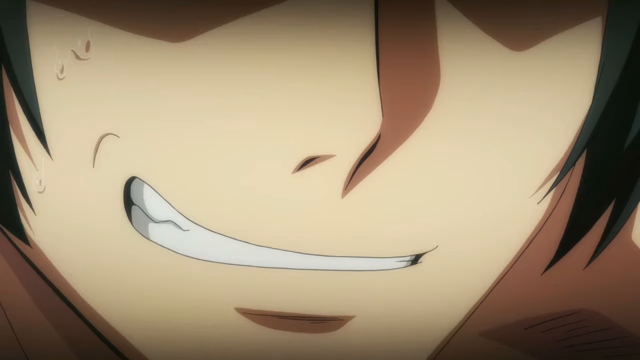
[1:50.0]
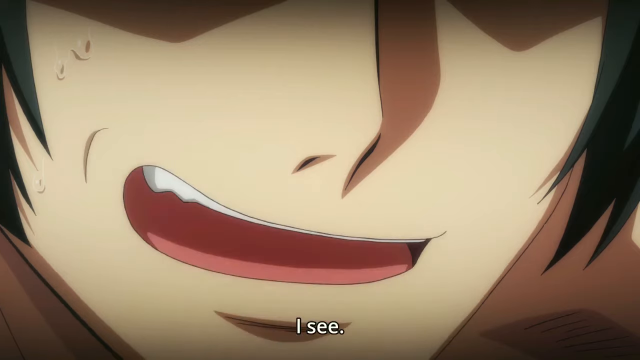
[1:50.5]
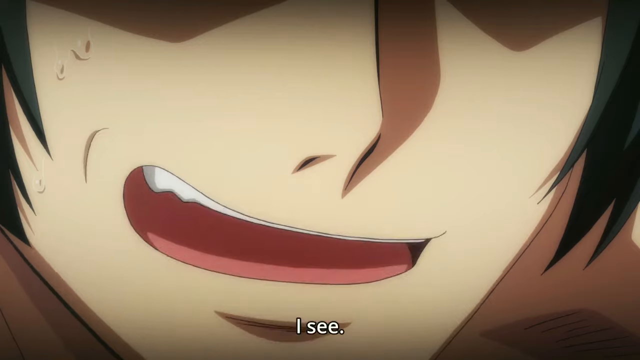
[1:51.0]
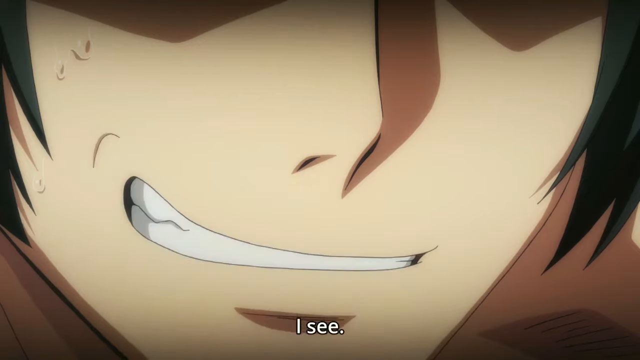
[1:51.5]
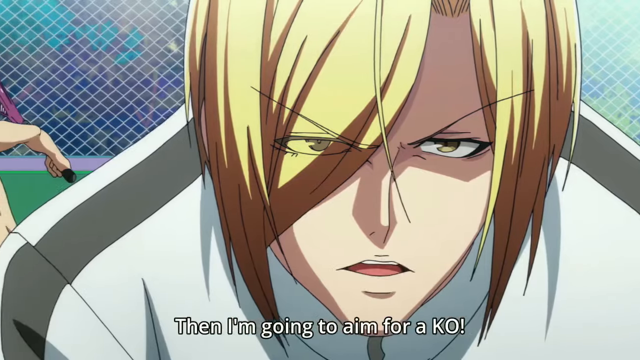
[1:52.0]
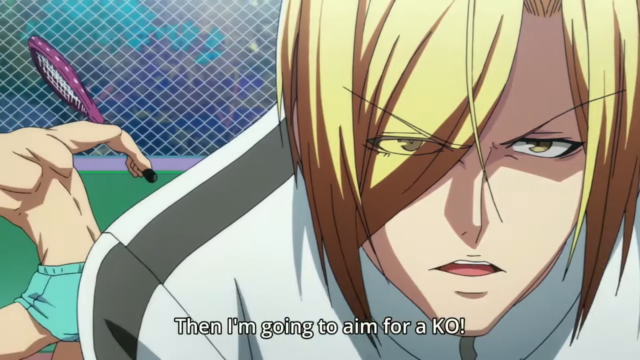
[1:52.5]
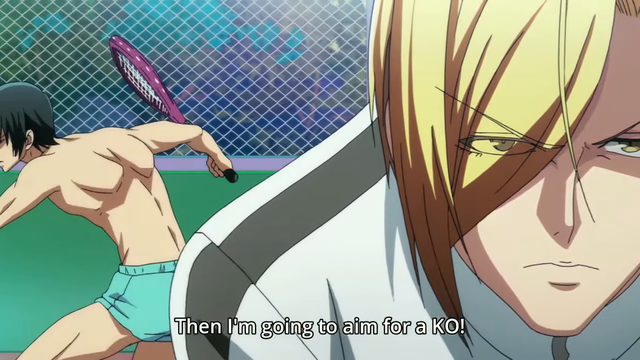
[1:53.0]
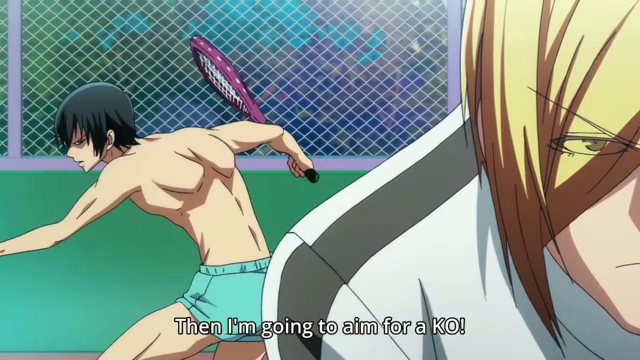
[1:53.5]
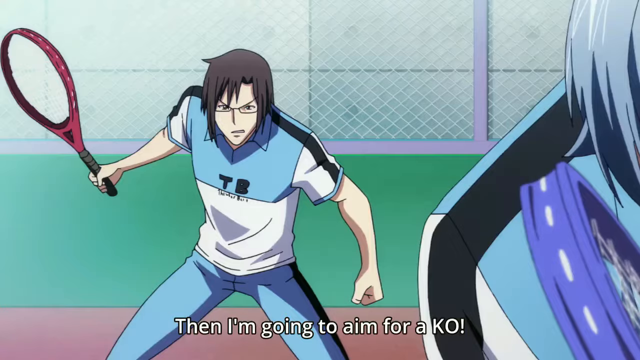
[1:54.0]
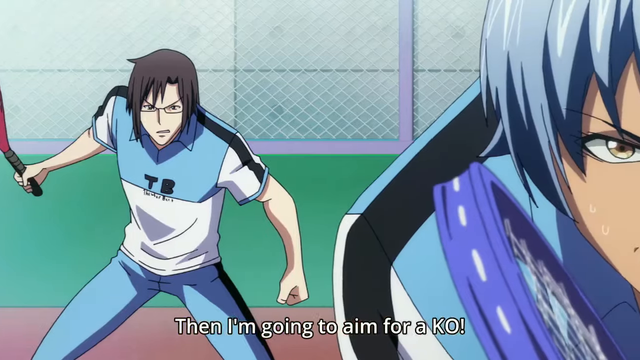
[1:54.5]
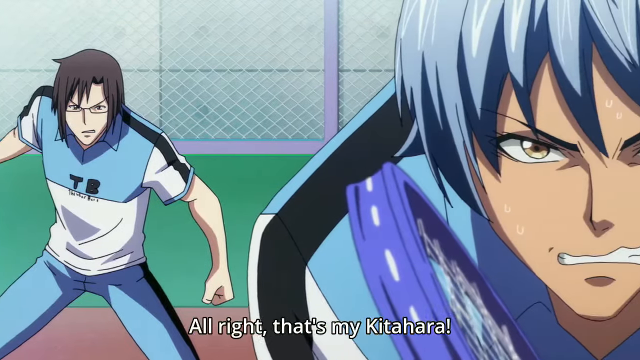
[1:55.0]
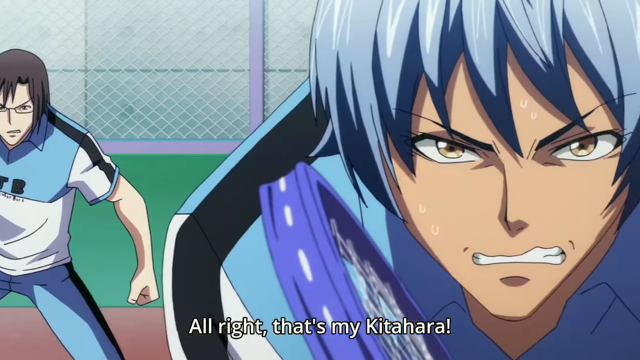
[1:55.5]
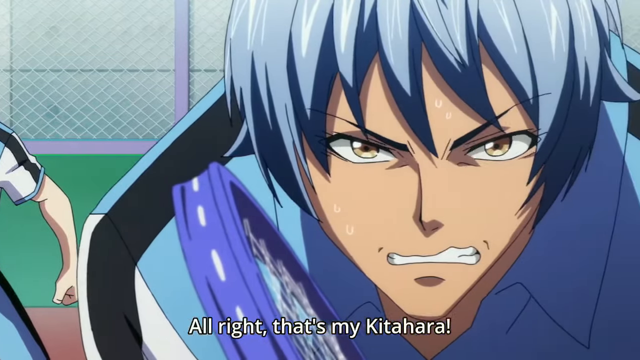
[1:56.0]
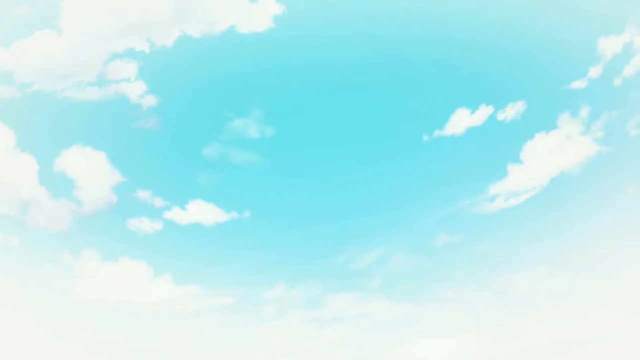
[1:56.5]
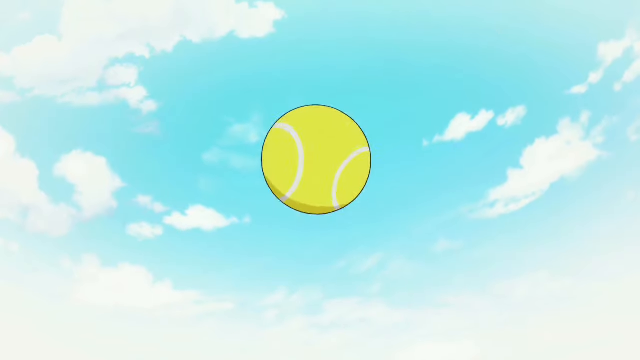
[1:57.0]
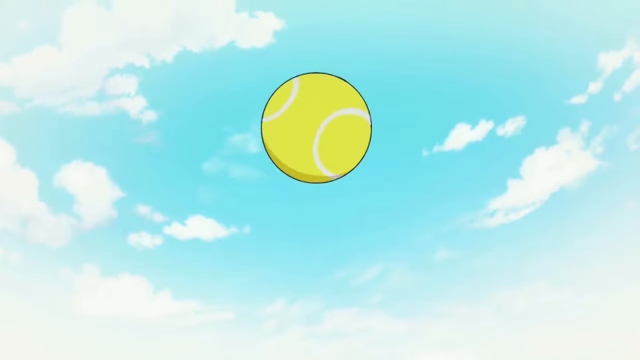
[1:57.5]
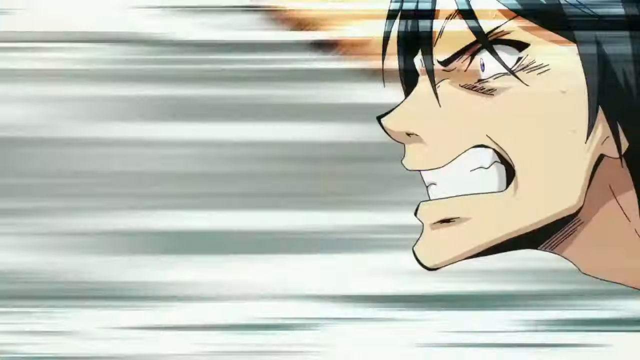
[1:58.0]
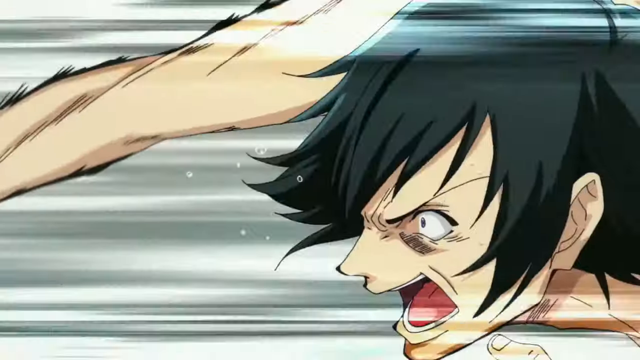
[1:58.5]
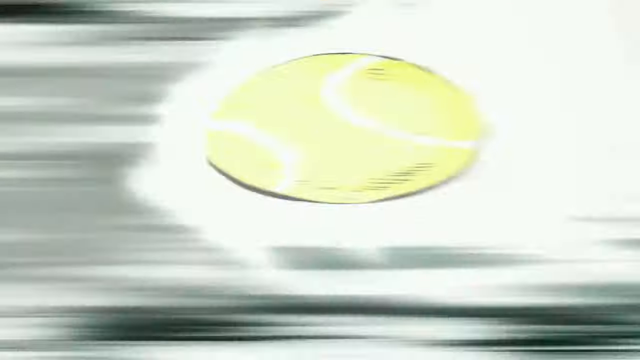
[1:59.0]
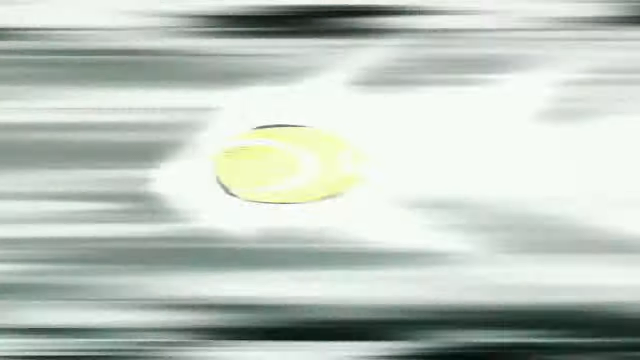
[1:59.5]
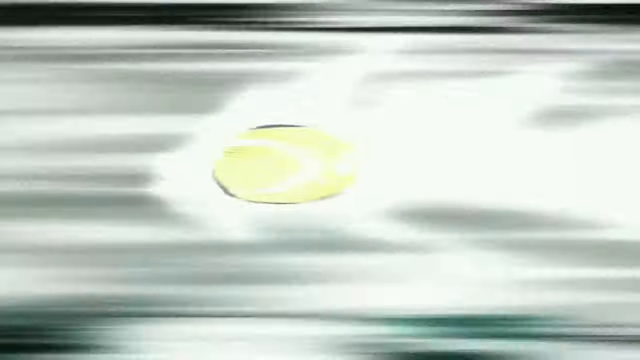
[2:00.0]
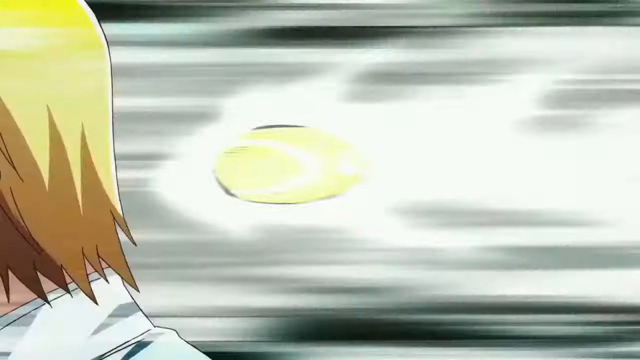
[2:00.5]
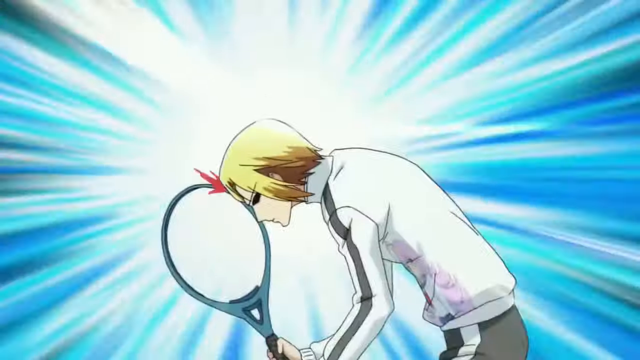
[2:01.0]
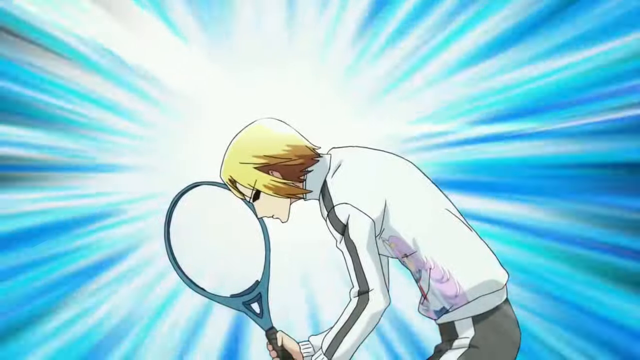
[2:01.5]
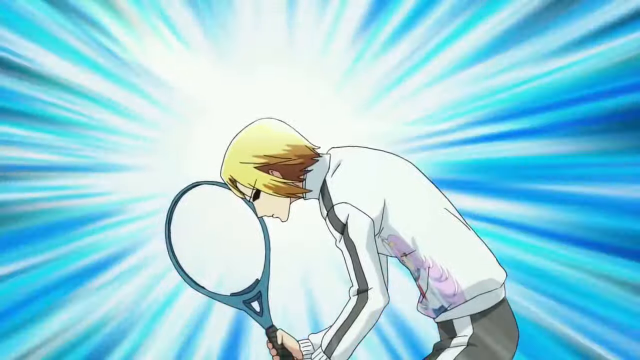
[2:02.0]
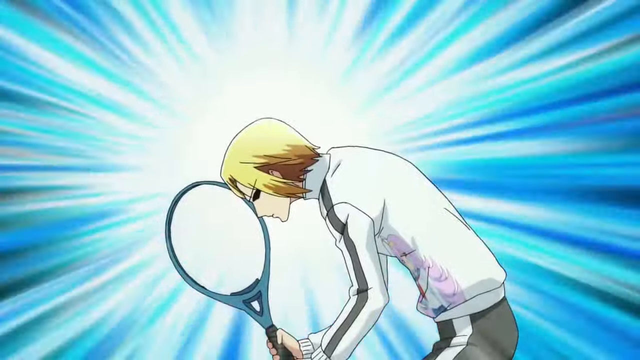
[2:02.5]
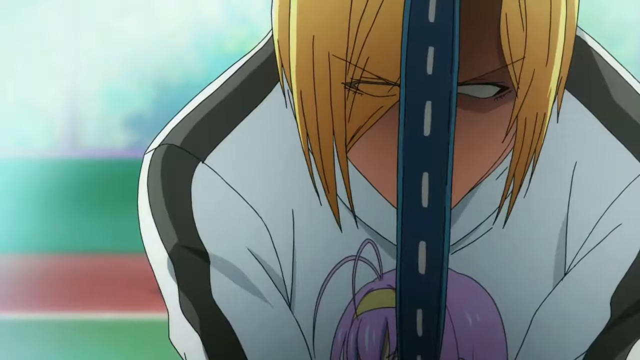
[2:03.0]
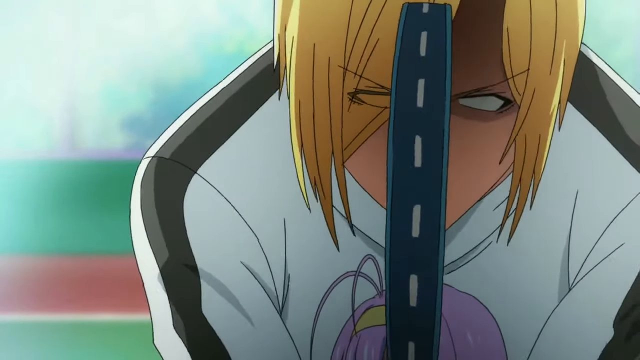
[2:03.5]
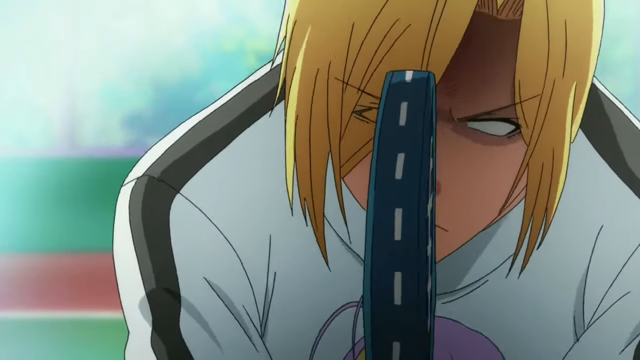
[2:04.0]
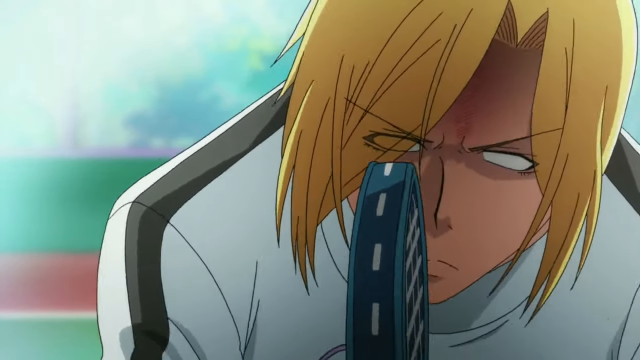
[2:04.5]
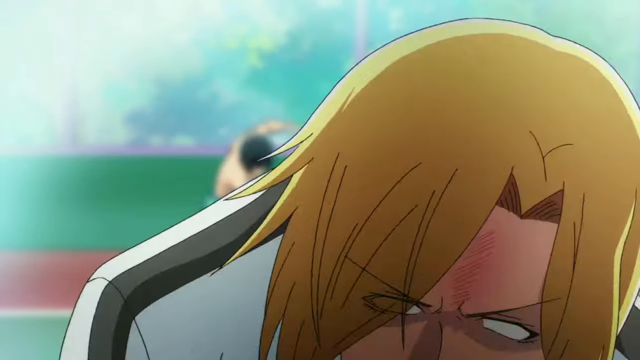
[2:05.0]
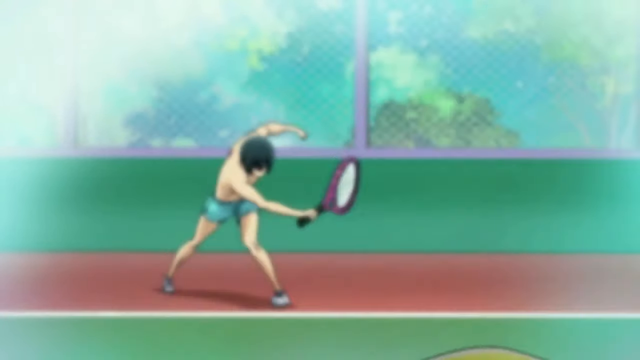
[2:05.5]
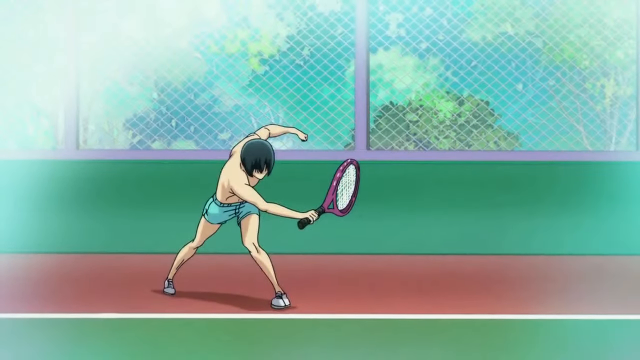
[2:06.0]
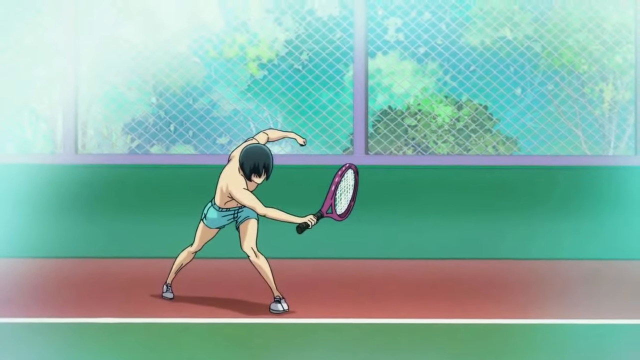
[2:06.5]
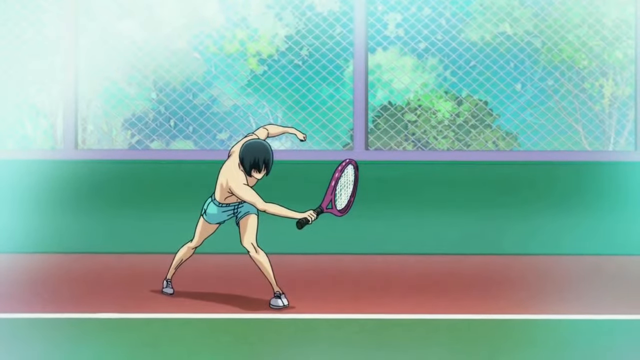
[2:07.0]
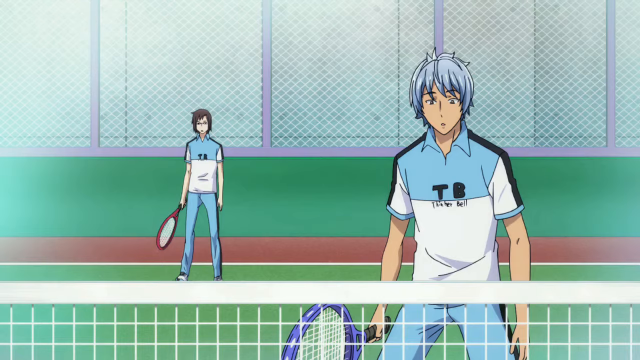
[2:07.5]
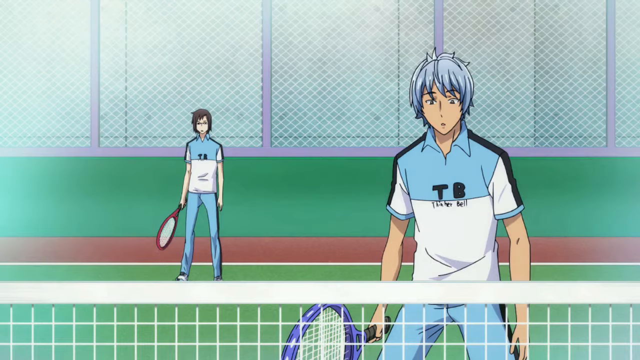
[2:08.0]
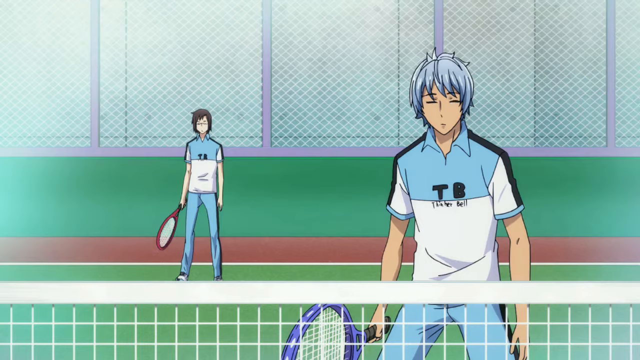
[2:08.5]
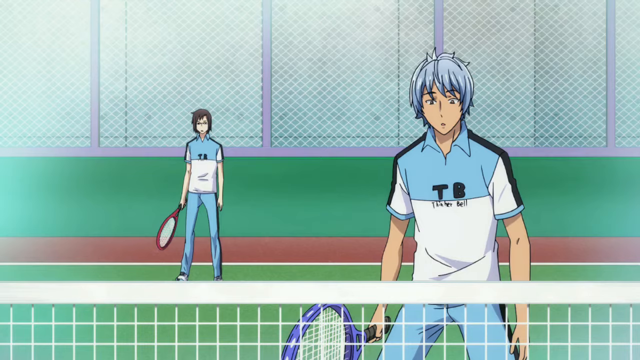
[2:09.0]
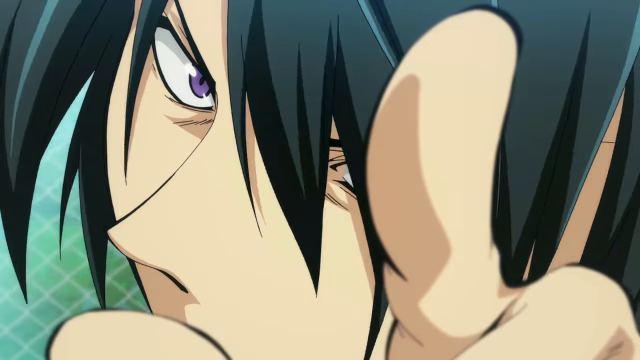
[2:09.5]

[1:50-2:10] In a very Japanese or manga-looking animation, two teams of two play tennis against each other. One team wears blue and white tops with the letters "TB" on them and holds tennis rackets; one of them has short brown hair and the other short blue hair. On the other team is a man who wears no top and has a pair of blue shorts on. Words flash up on the bottom of the screen as the characters talk and play. One of them hits the ball really hard and it strikes a member of the other team in the back of the head: it is his own teammate. The other team looks shocked and surprised as the player falls over onto the floor.